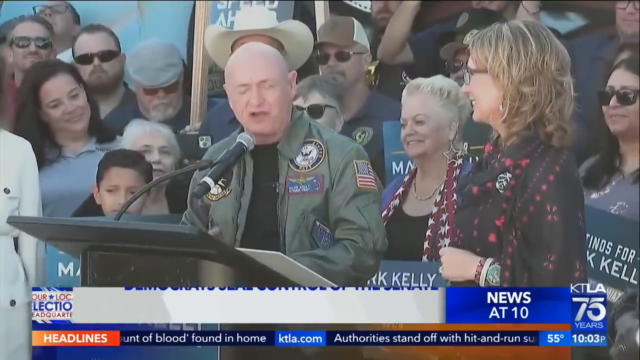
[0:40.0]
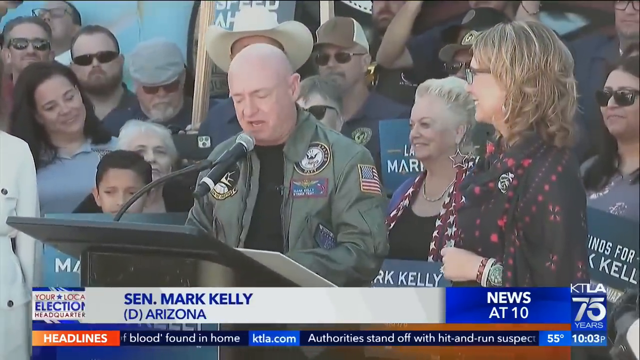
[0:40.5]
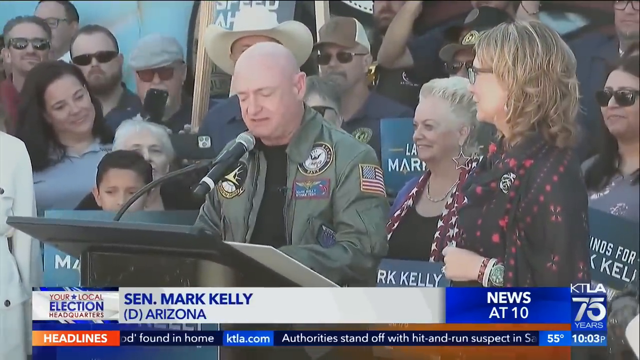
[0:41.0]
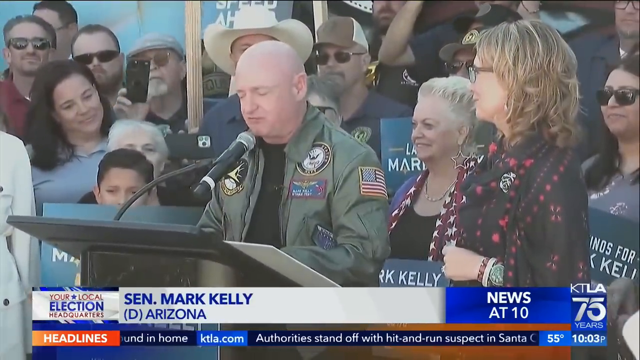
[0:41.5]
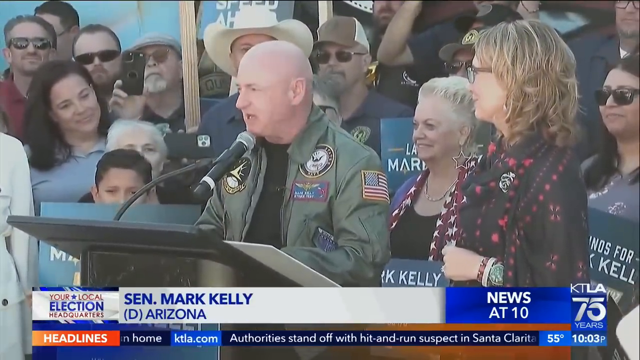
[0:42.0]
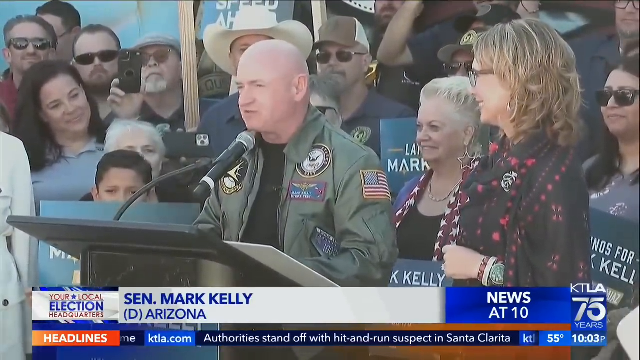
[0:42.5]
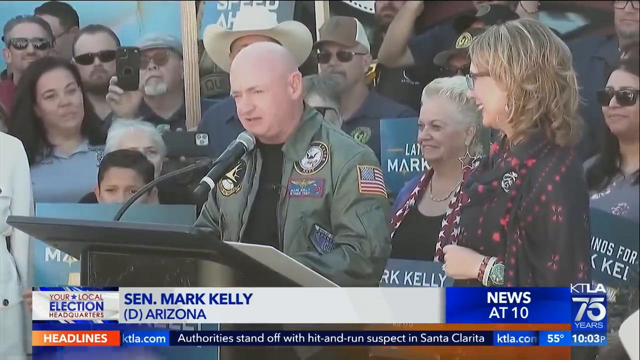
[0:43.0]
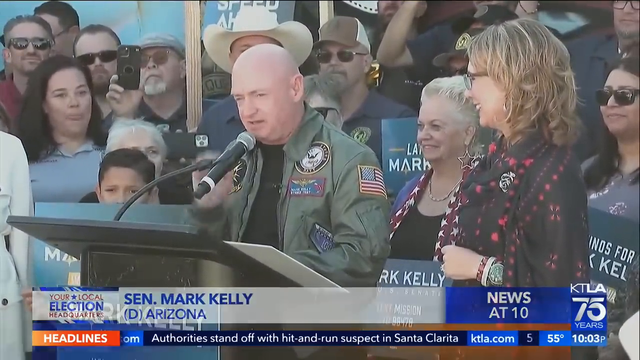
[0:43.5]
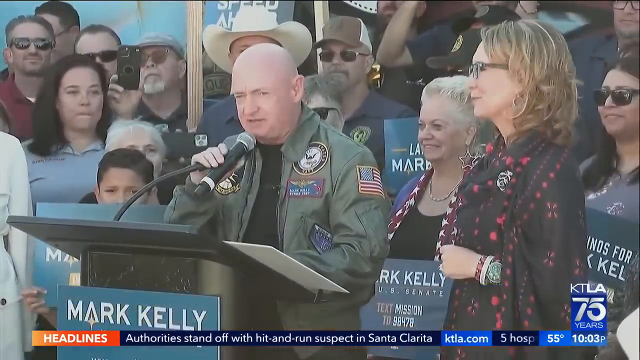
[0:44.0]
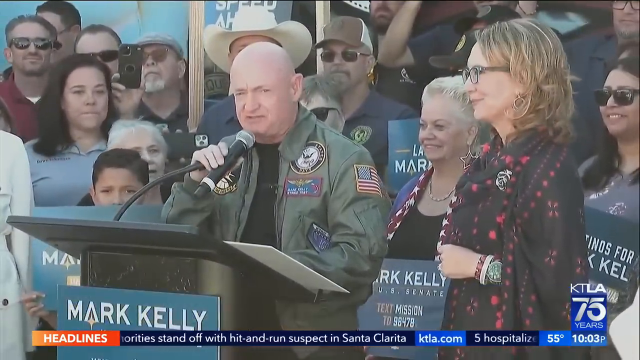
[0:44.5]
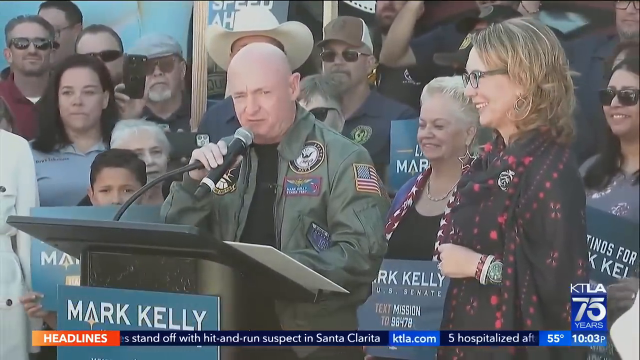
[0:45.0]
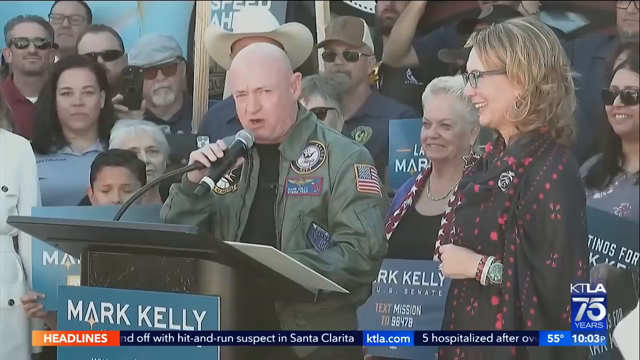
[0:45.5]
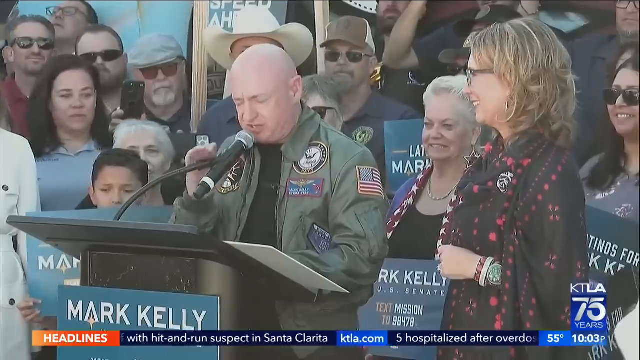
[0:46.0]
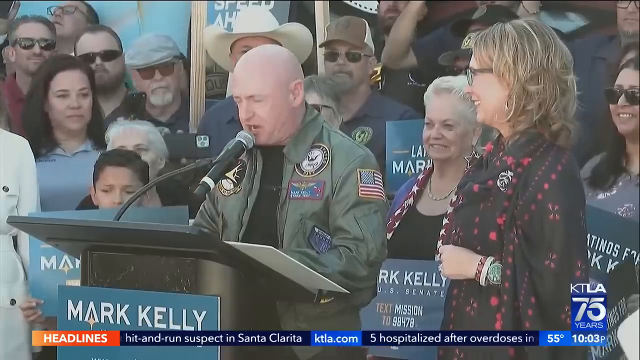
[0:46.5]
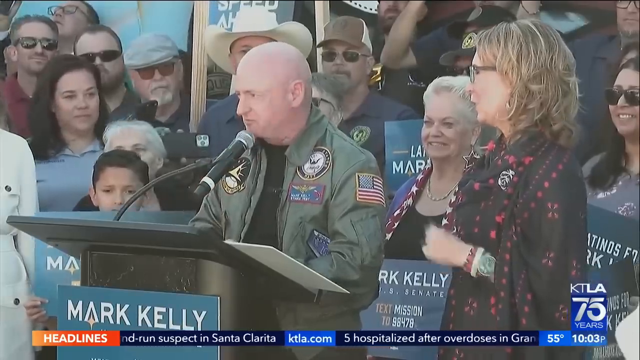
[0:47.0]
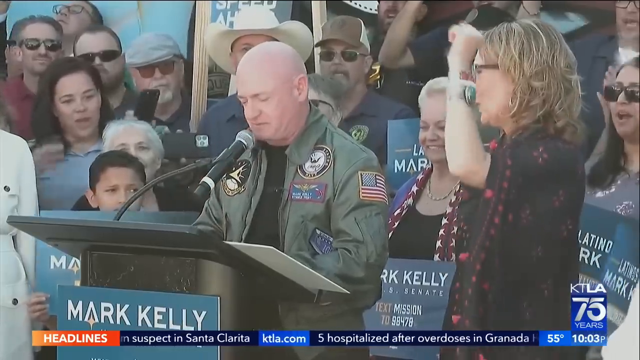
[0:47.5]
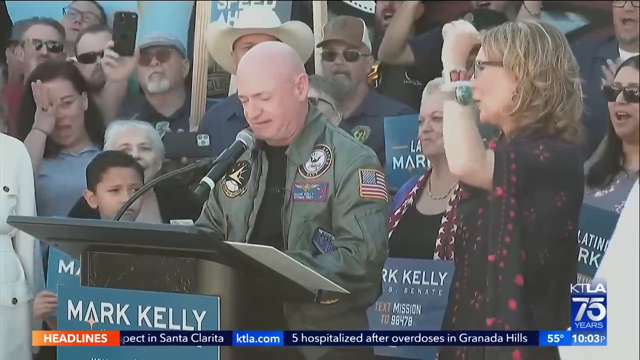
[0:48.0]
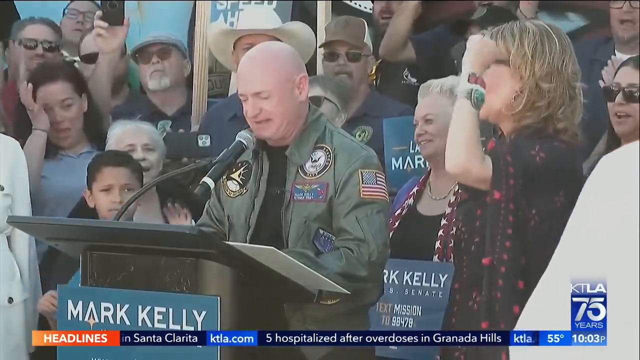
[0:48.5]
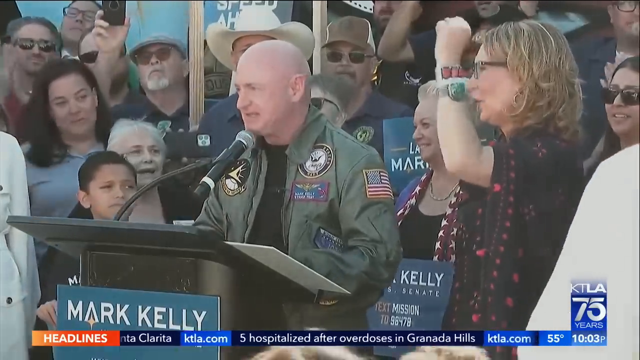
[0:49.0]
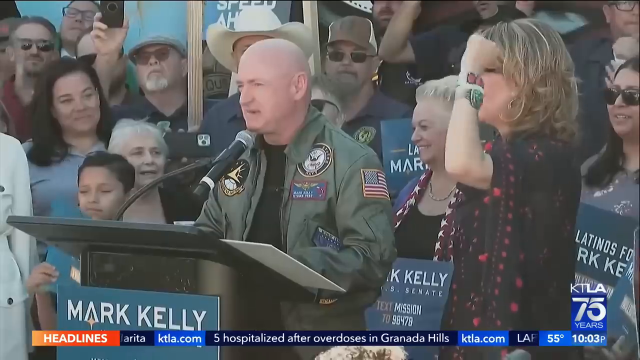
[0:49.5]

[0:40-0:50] The KTLA-75 footage starts with Mark Kelly, apparently saying the same things as before. He stands next to Gabby Giffords, surrounded by people who are his supporters. A blurb moves past across the bottom, apparently something about five hospitalized, though it goes by too quickly to read clearly.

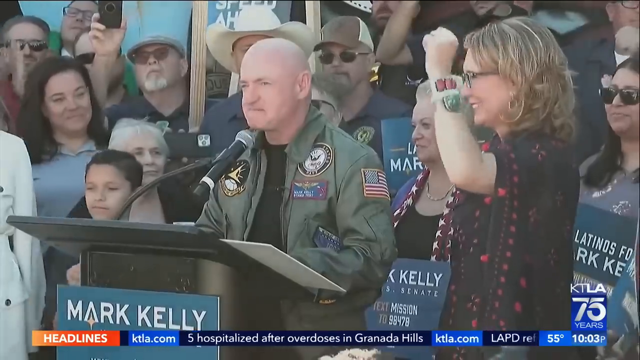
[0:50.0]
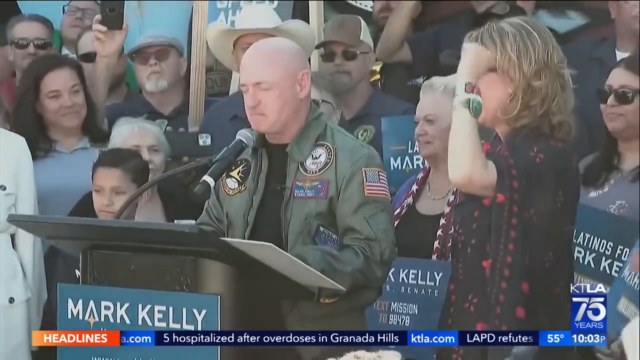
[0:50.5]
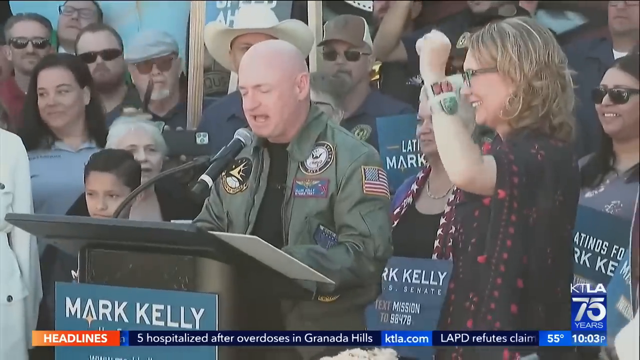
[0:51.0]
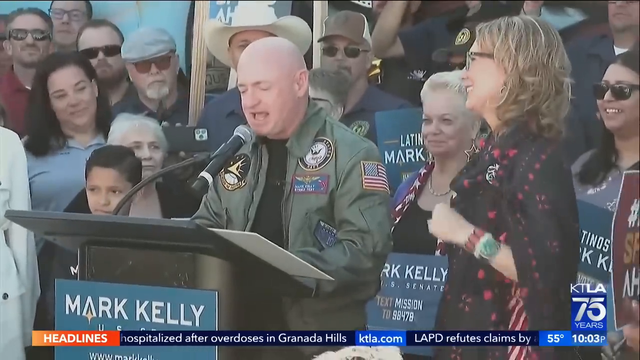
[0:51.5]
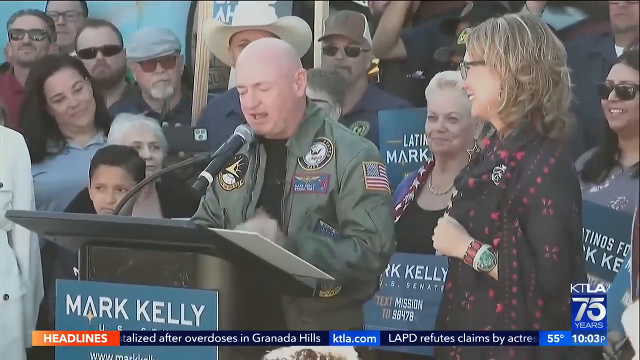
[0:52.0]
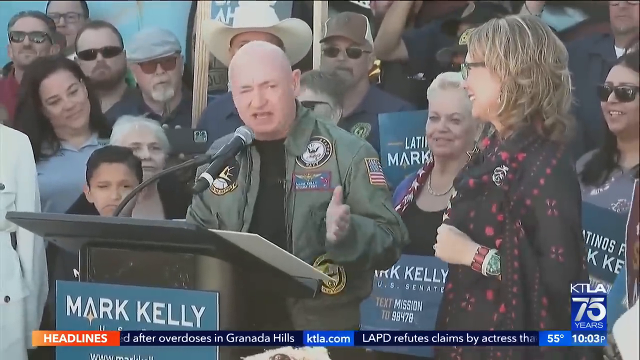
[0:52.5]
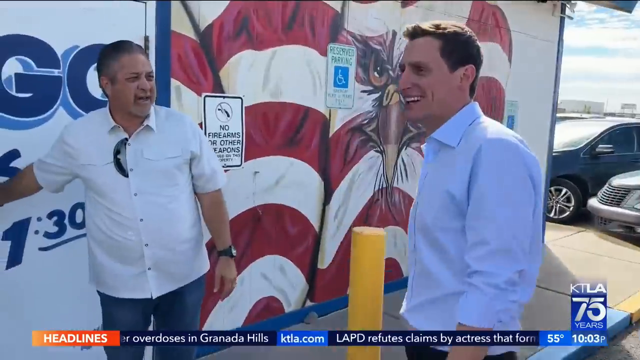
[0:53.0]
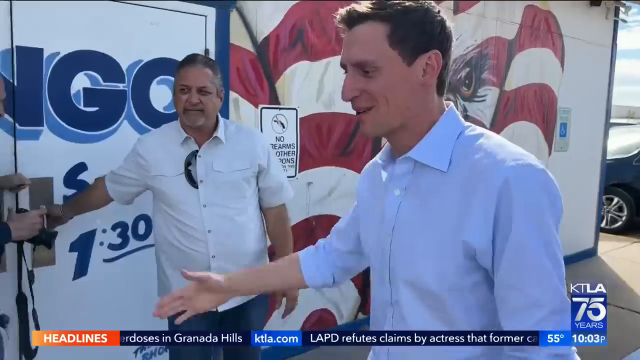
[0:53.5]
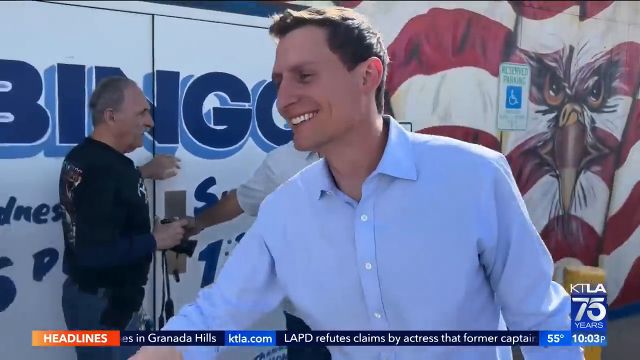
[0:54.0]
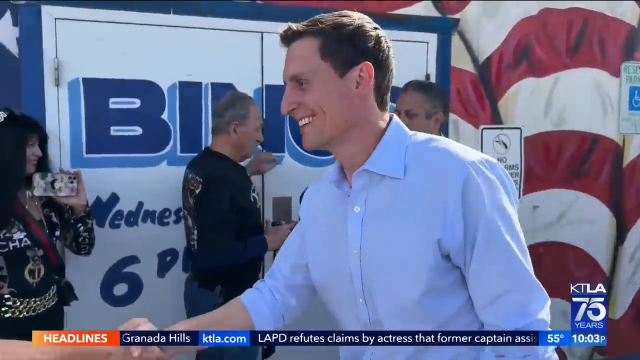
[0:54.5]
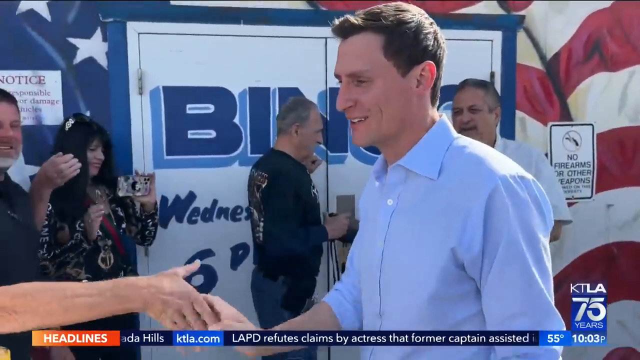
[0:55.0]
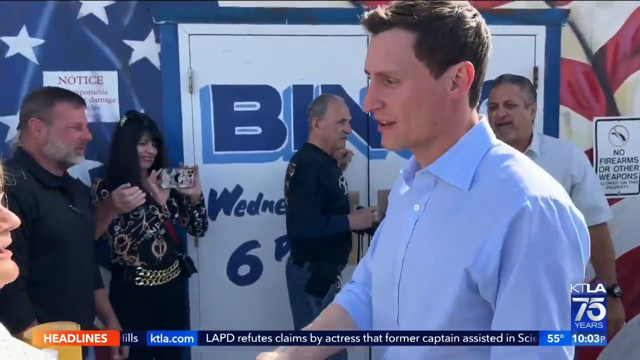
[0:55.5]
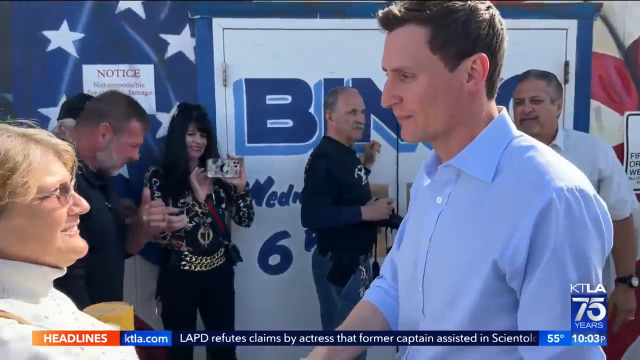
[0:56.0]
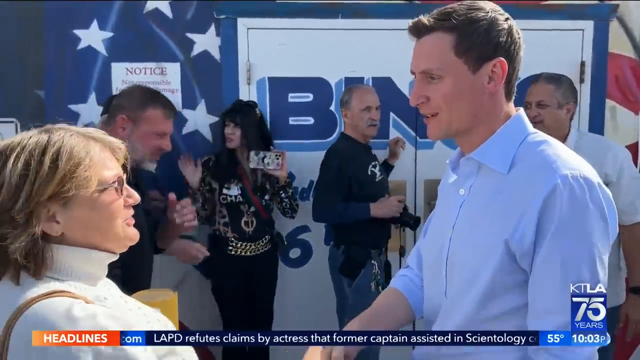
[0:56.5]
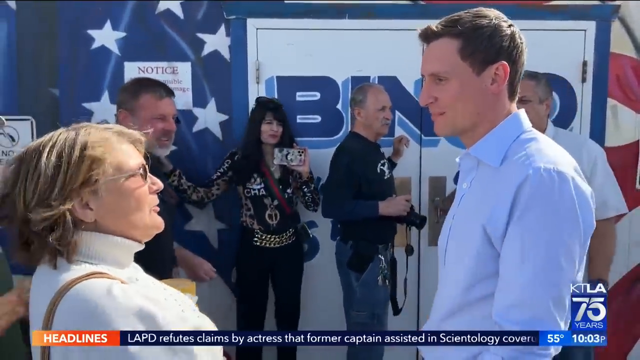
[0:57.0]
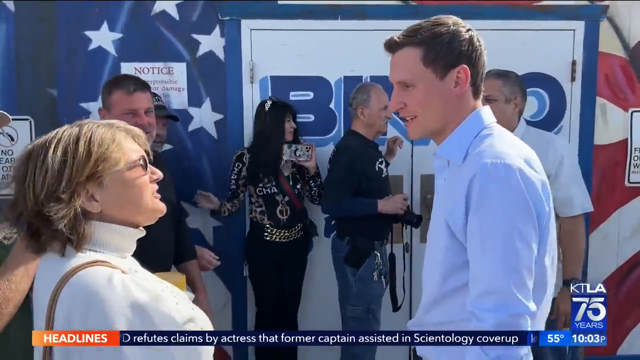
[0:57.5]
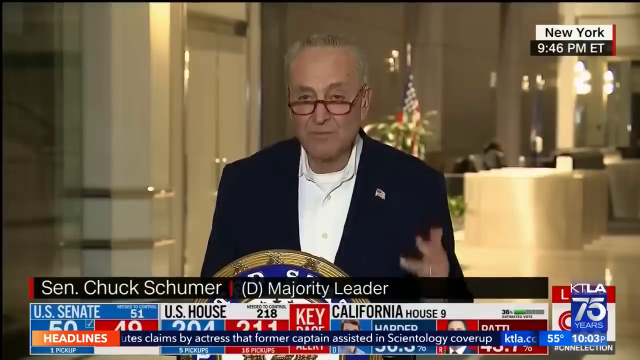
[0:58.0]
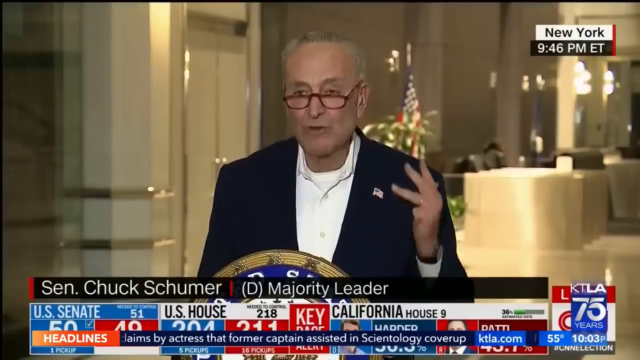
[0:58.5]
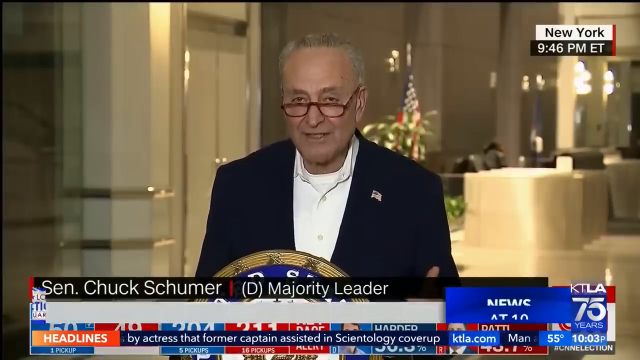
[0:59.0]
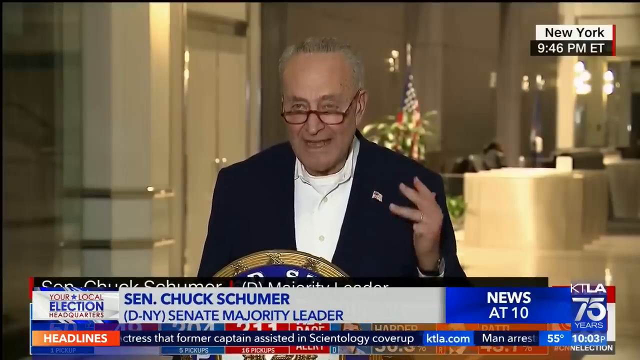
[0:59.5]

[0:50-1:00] The footage starts with Mark Kelly. Gabby Giffords raises her left hand in the air in a kind of fist-pumping, we-won gesture. After Kelly, the coverage moves to another man: slim, kind of early middle-aged, with dark hair, unidentified and possibly the same man seen earlier. He seems to be speaking to supporters and voters, and he shakes a woman's hand while other people stand behind him. The scene cuts to Chuck Schumer, apparently saying something about winning control of the Senate.